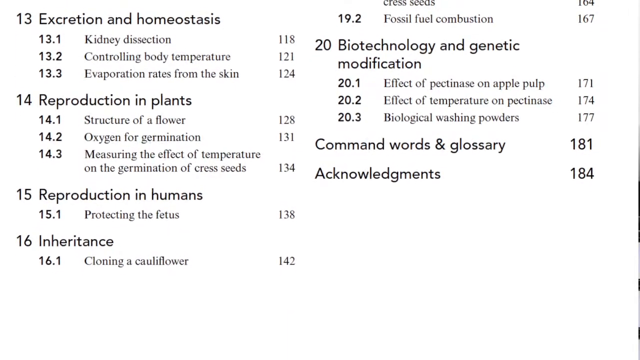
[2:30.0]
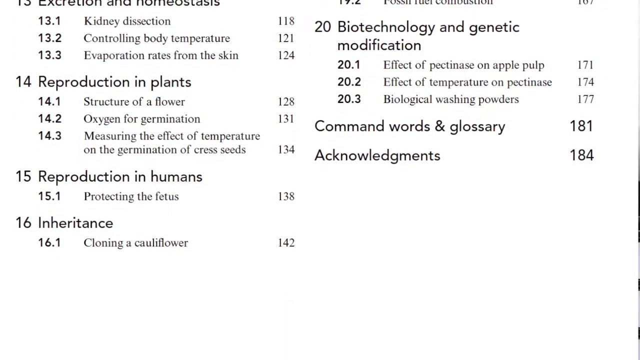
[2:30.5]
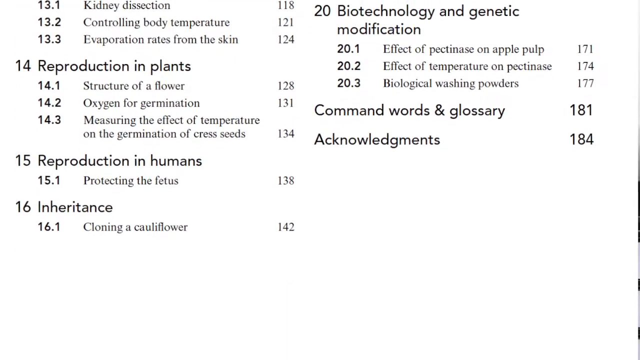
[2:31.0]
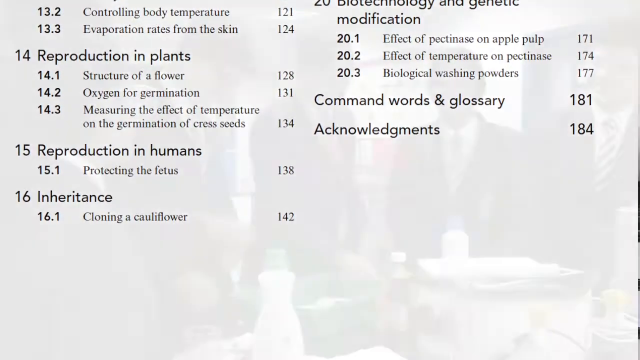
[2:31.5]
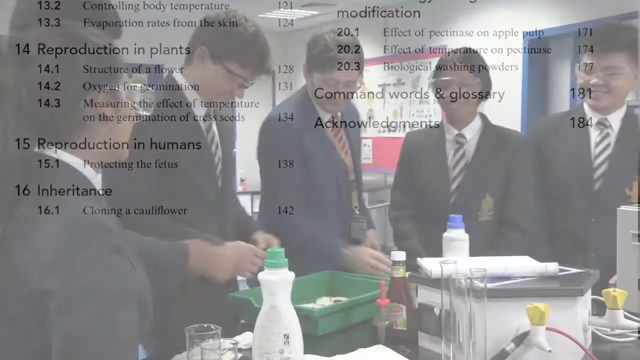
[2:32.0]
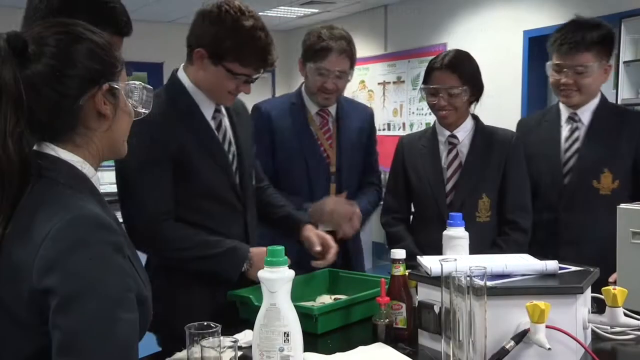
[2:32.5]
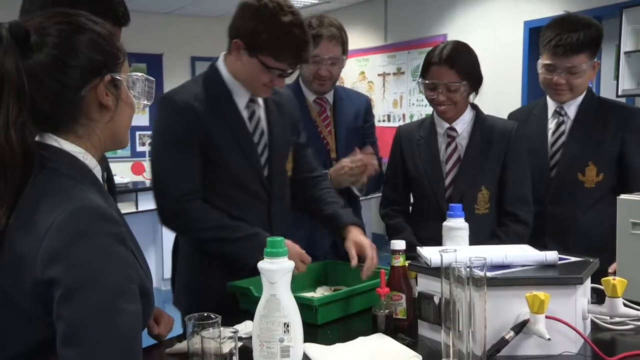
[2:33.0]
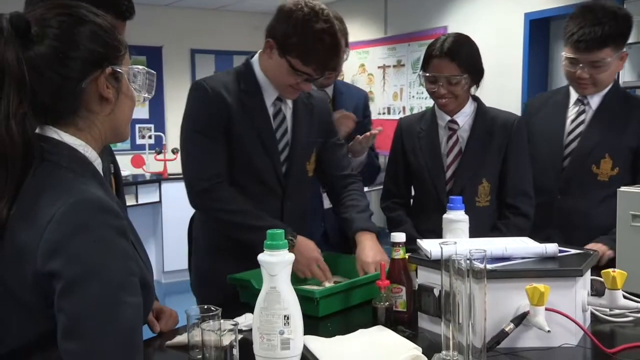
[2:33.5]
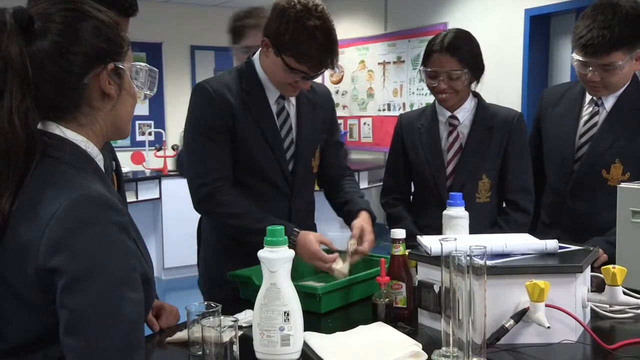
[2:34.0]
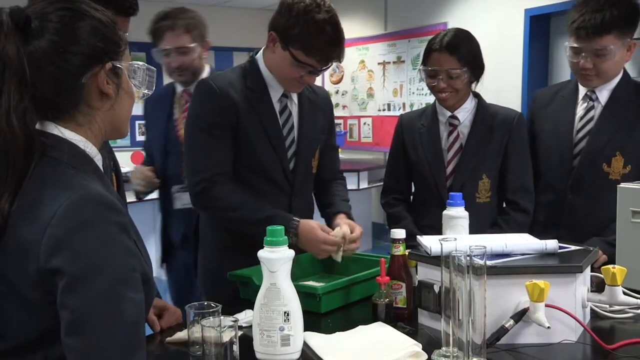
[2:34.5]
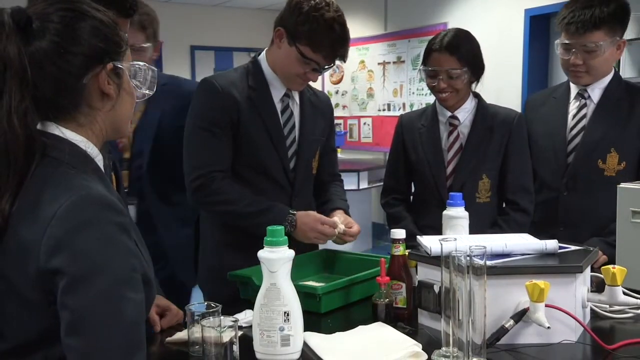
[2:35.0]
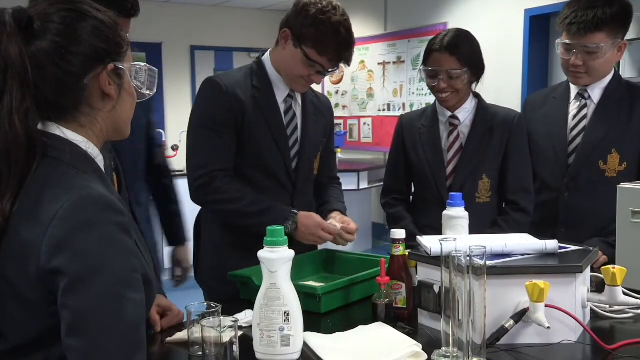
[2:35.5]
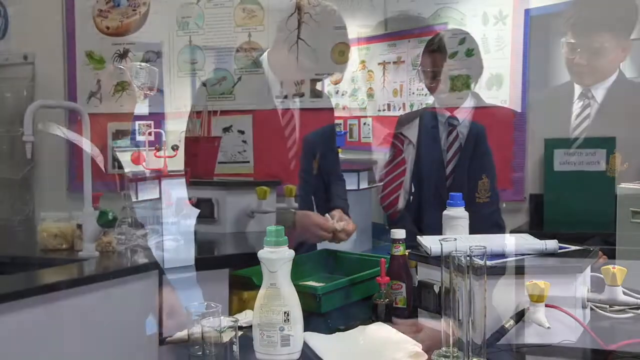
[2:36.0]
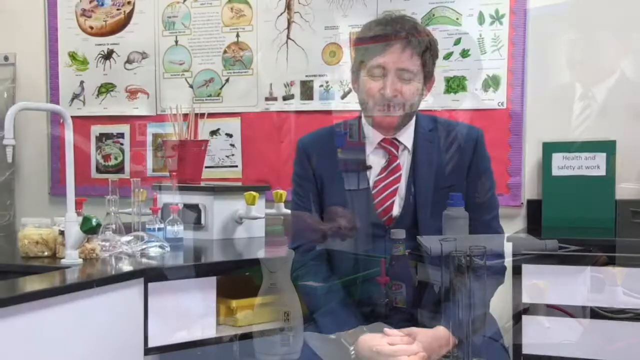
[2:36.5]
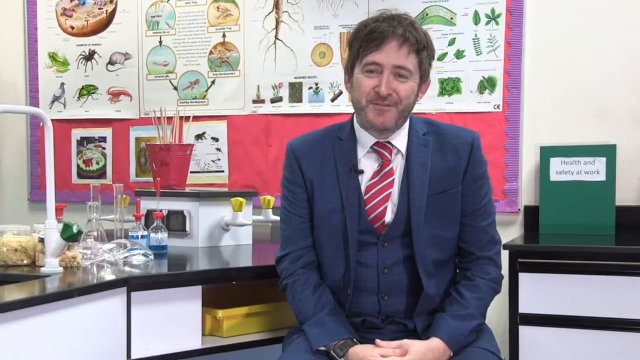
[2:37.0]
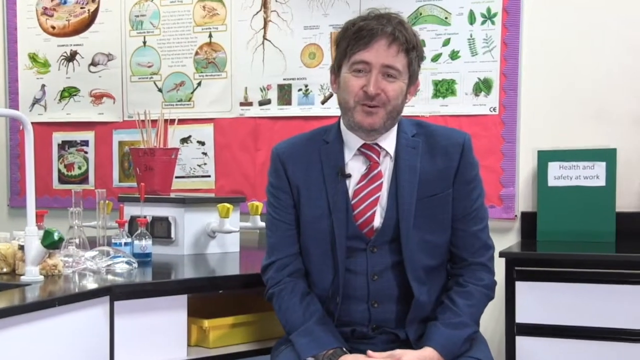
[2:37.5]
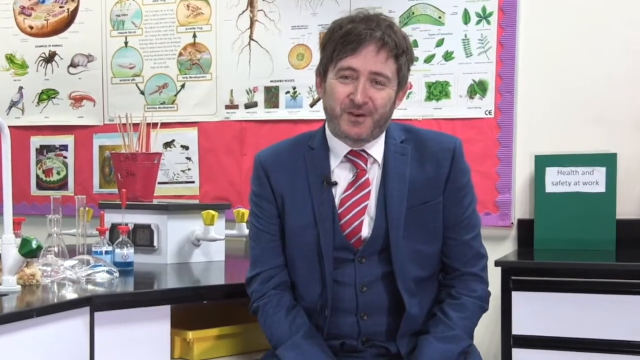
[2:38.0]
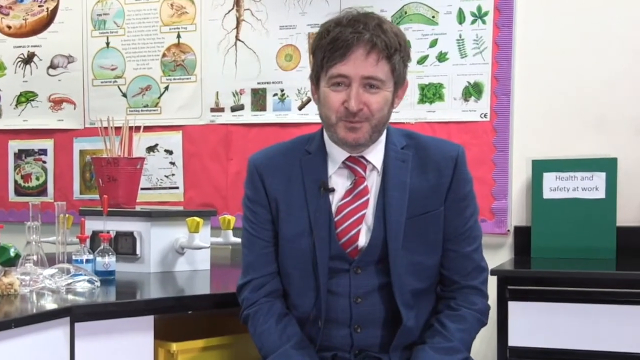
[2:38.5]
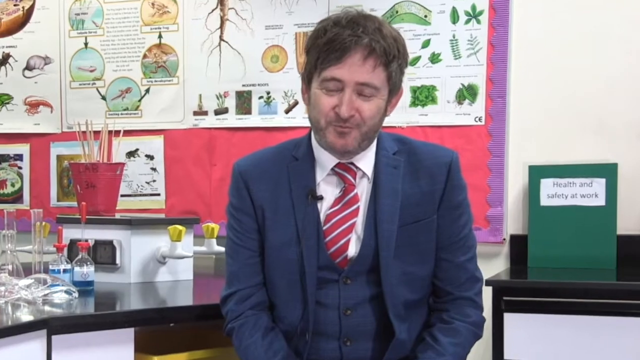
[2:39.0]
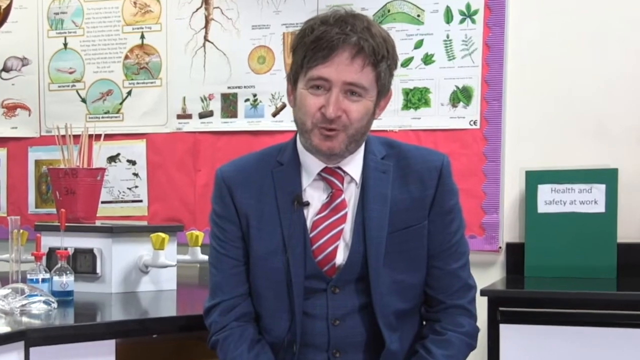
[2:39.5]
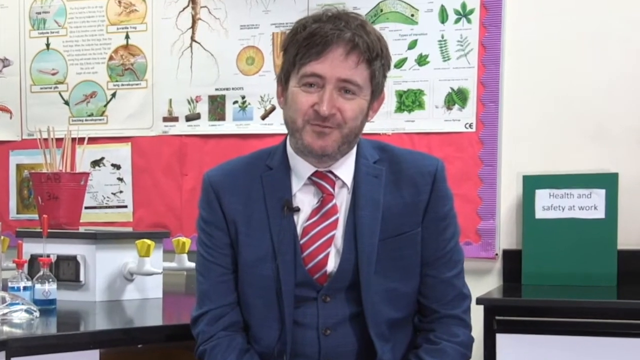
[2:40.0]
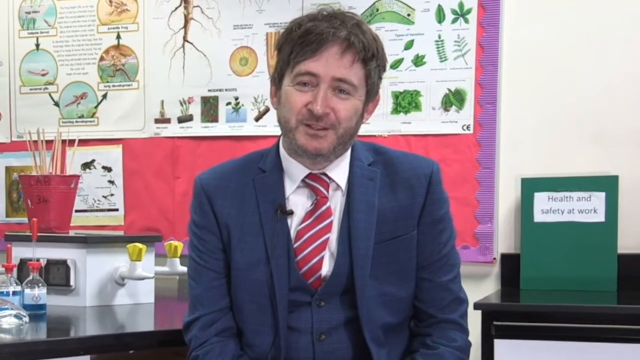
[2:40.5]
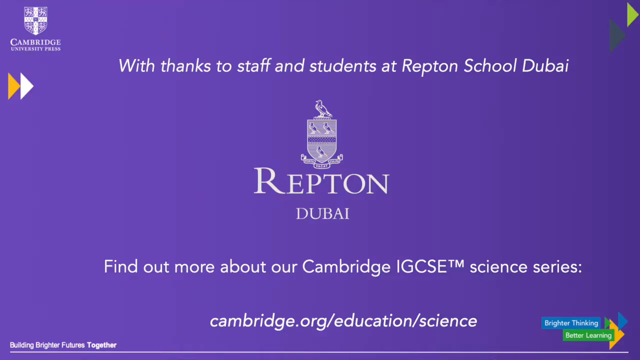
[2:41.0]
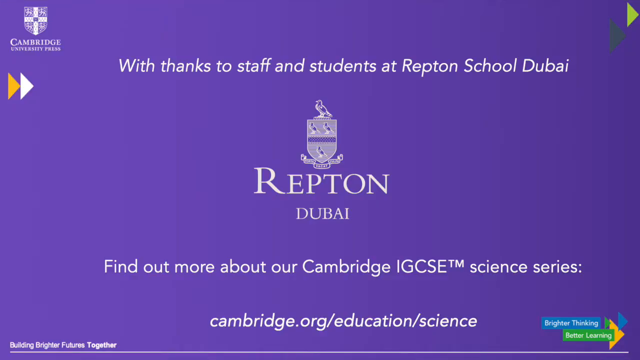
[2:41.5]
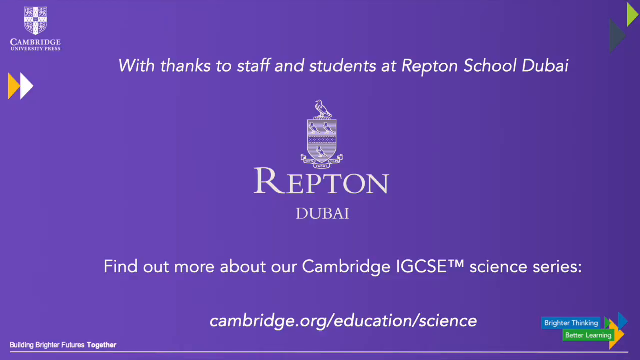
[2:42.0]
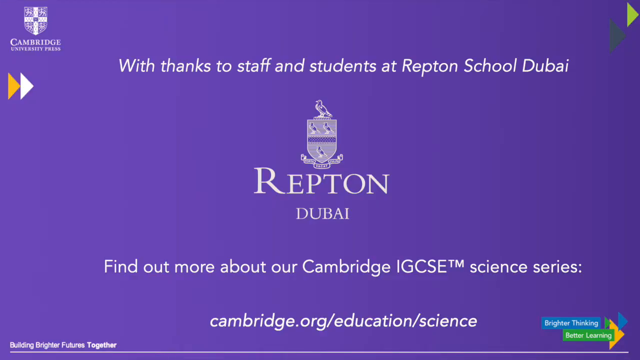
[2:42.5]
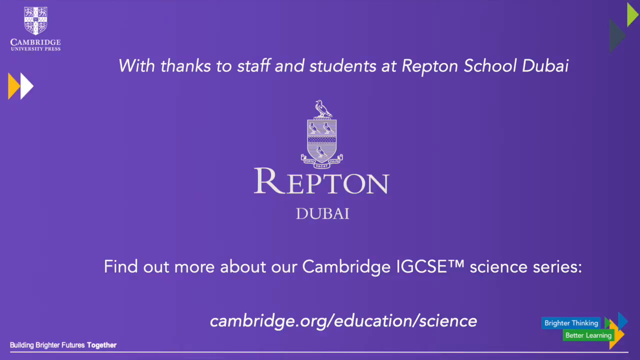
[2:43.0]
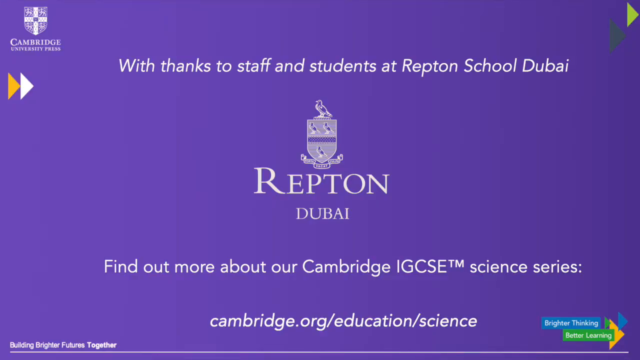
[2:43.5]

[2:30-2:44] A list of chapters appears, apparently the index of the book: "13 excretion and homeostasis," "14 reproduction in plants," "15 reproduction in humans," "16 inheritance," and, just visible, "20 biotechnology and genetic modification." The video switches back to the students, three boys and two girls, all wearing protective eyewear and seeming to conduct an experiment. They are all smiling and seem happy. The man behind them looks to be a teacher and is dressed in a very smart suit. All the students are in uniform with black-and-white horizontal ties and look like private school children. A boy seems to be doing something in a green box. A final page with a purple background reads "With thanks to staff and students at Repton School Dubai. Find out more about our Cambridge IGCSE Science Series. Cambridge.org/education/science."